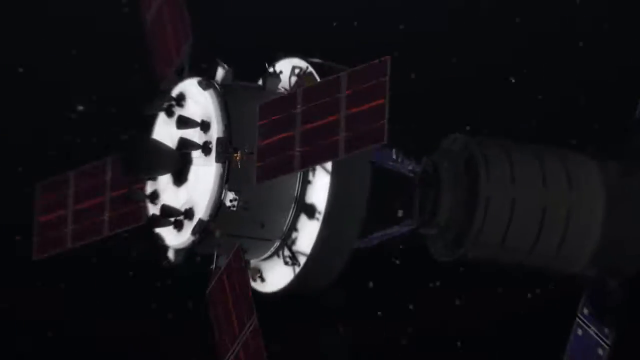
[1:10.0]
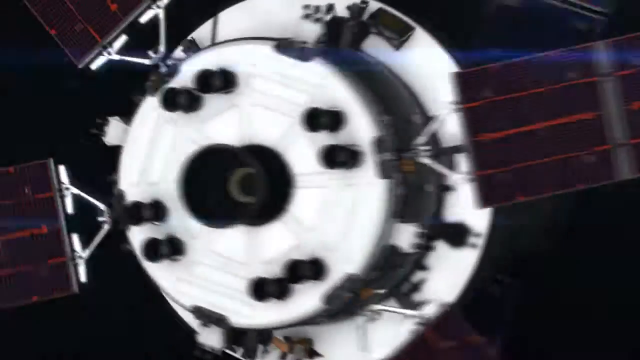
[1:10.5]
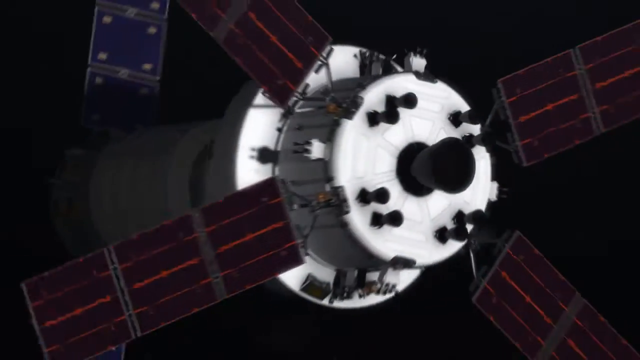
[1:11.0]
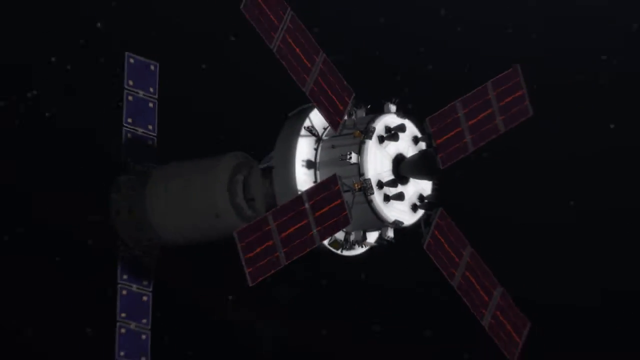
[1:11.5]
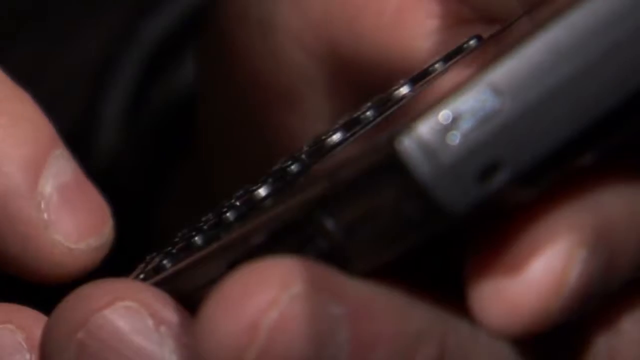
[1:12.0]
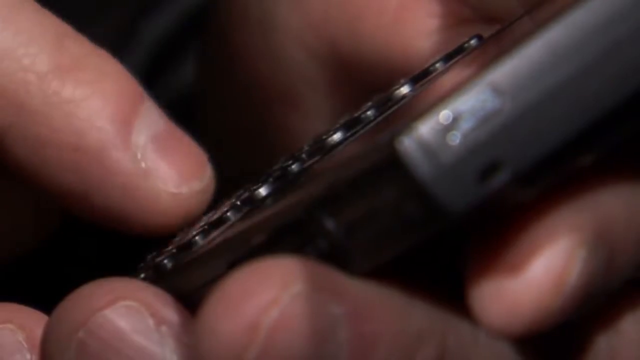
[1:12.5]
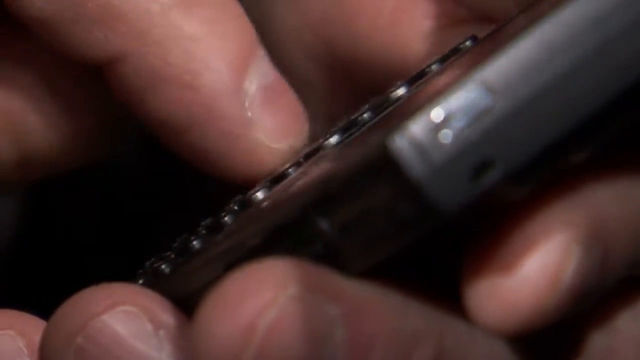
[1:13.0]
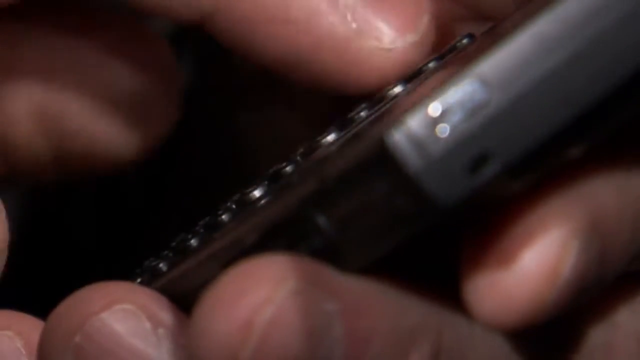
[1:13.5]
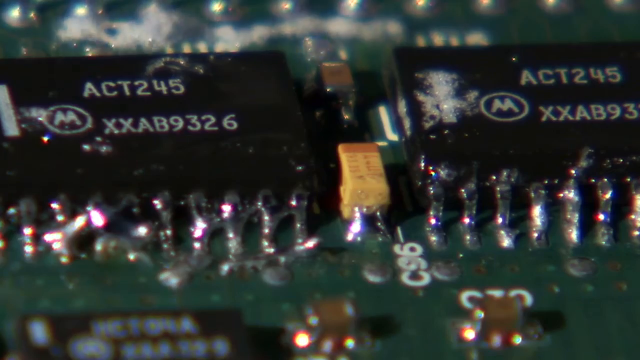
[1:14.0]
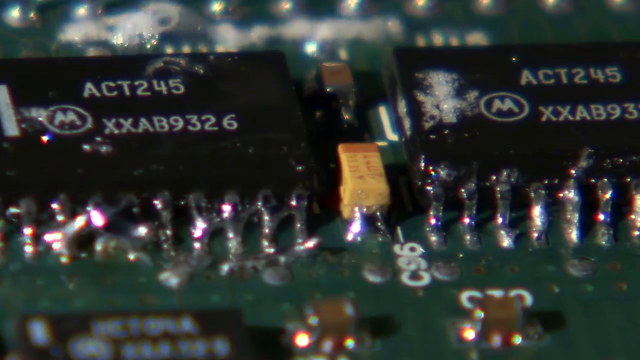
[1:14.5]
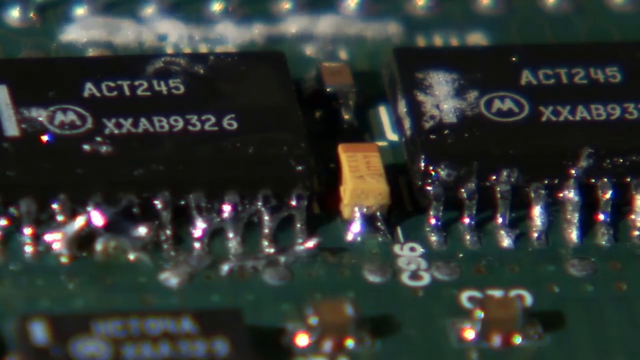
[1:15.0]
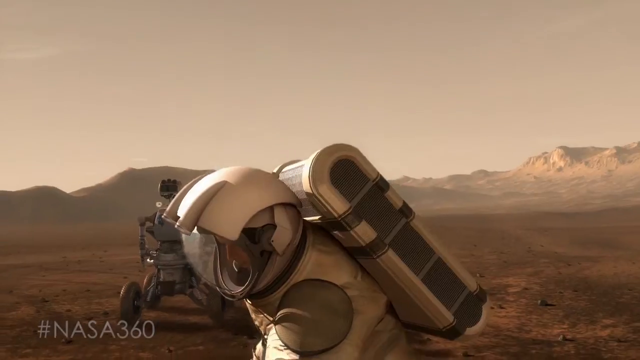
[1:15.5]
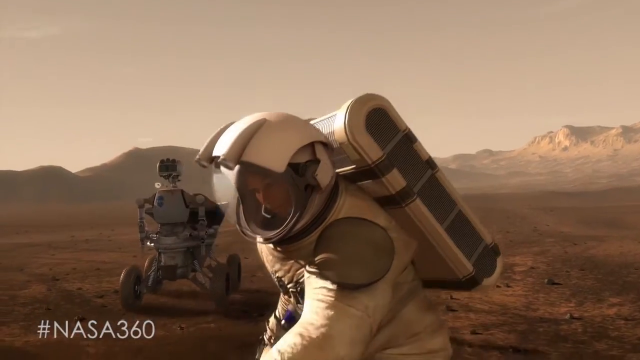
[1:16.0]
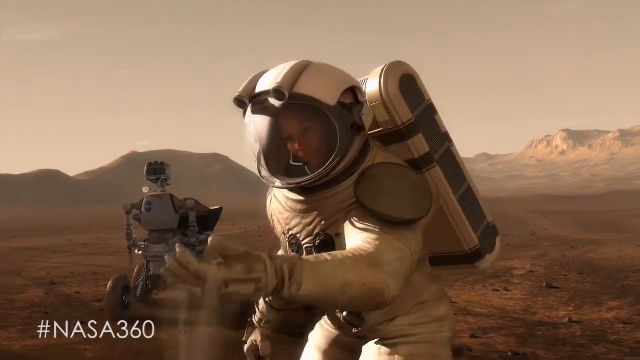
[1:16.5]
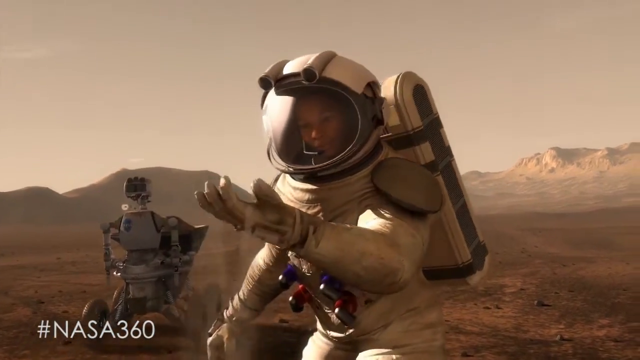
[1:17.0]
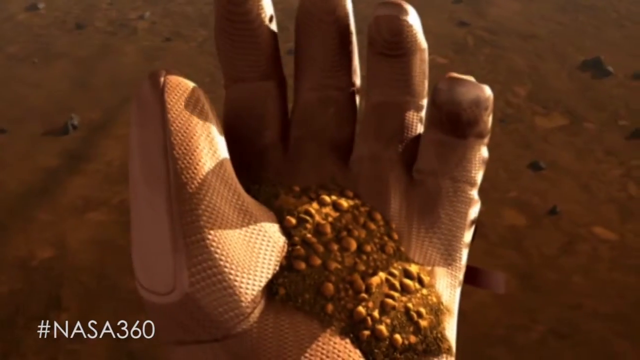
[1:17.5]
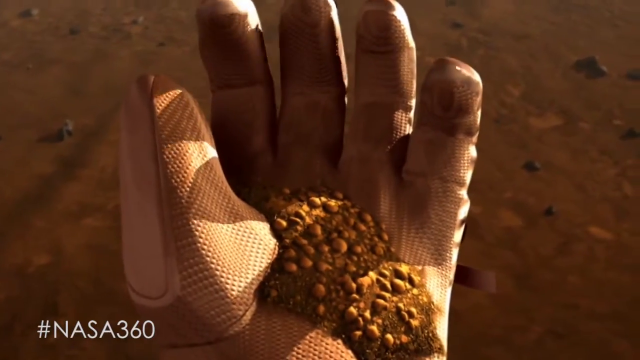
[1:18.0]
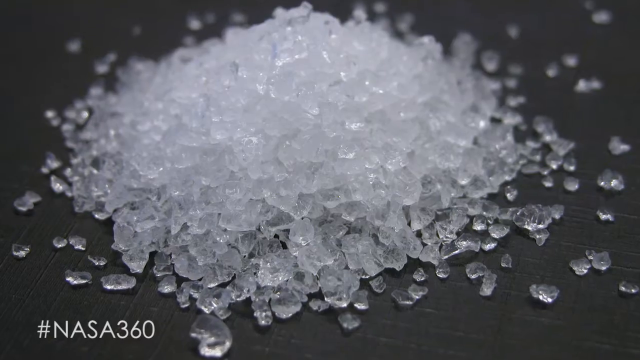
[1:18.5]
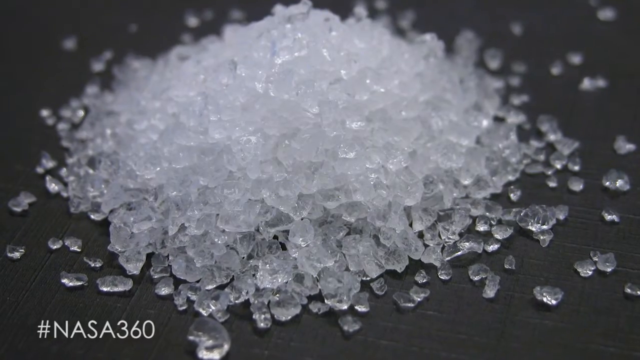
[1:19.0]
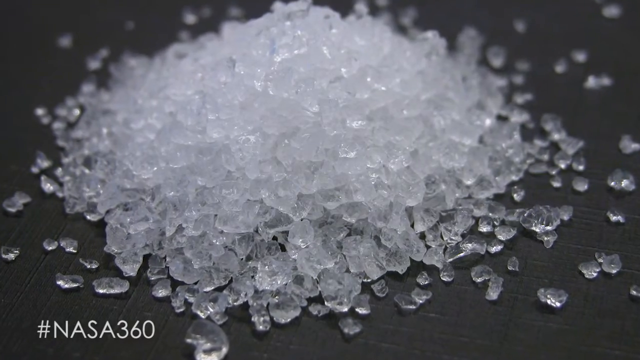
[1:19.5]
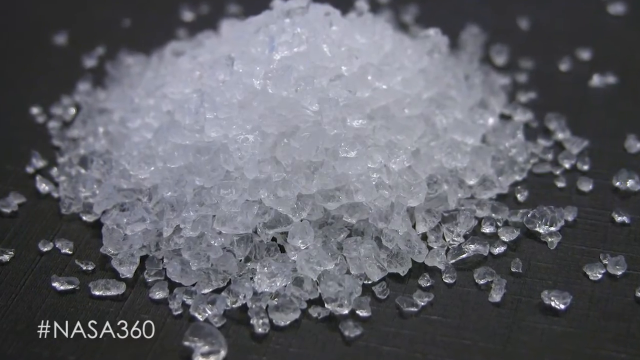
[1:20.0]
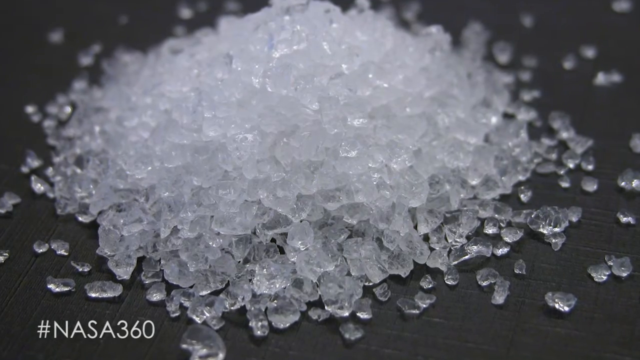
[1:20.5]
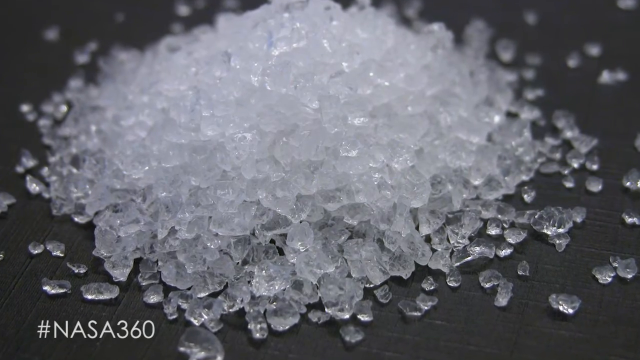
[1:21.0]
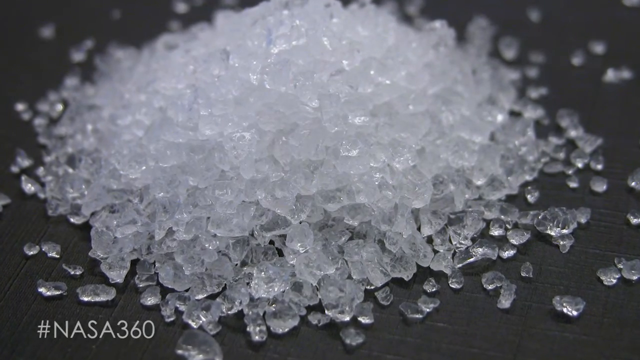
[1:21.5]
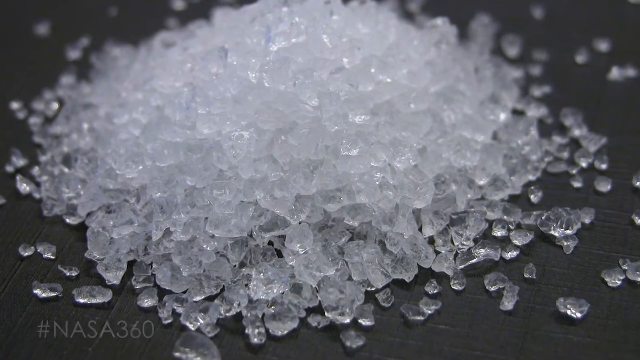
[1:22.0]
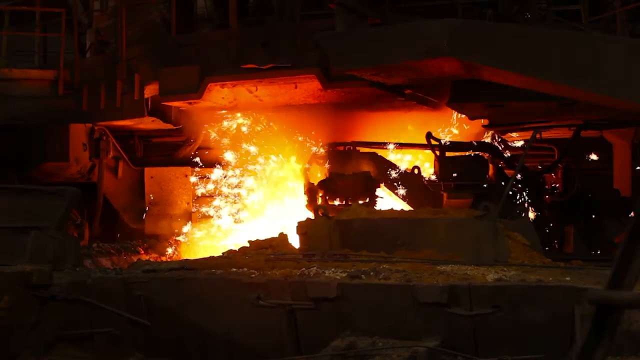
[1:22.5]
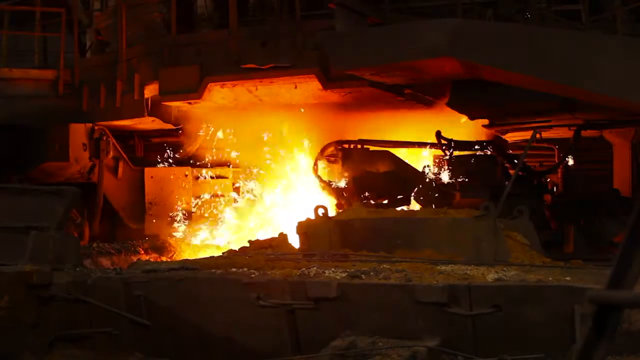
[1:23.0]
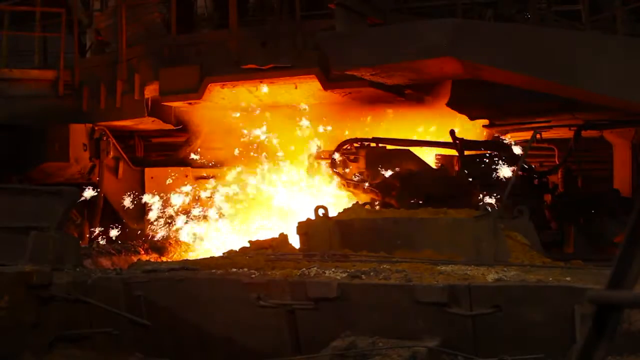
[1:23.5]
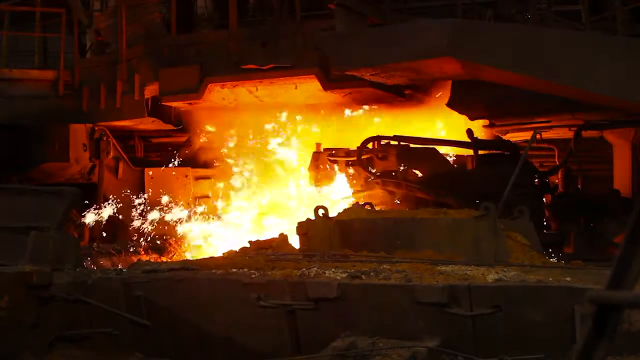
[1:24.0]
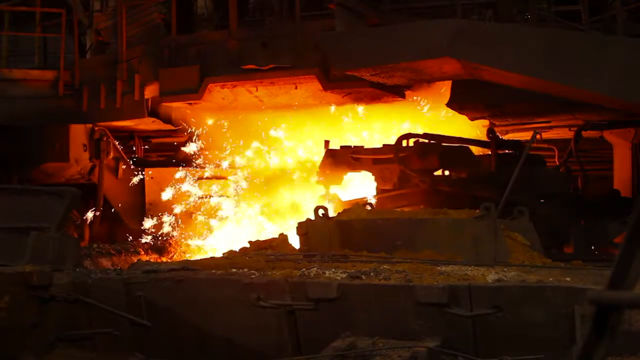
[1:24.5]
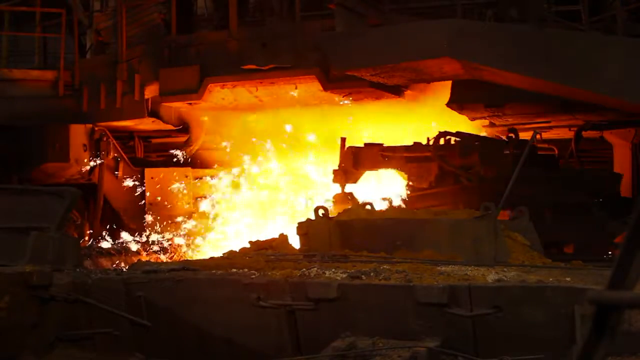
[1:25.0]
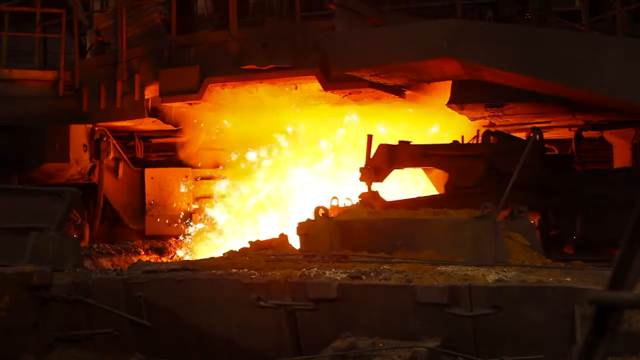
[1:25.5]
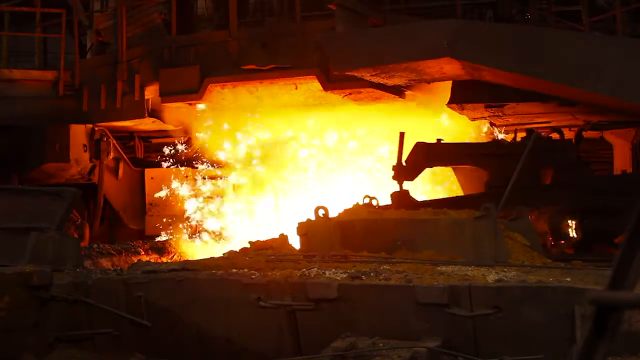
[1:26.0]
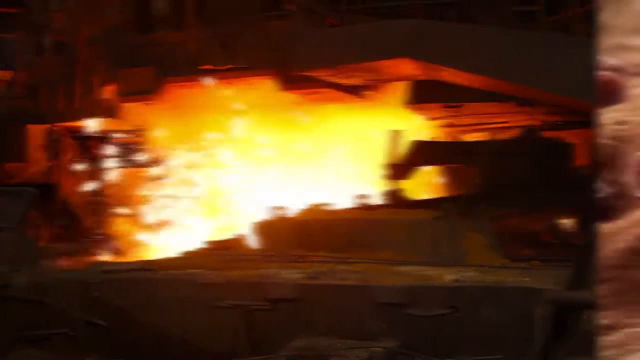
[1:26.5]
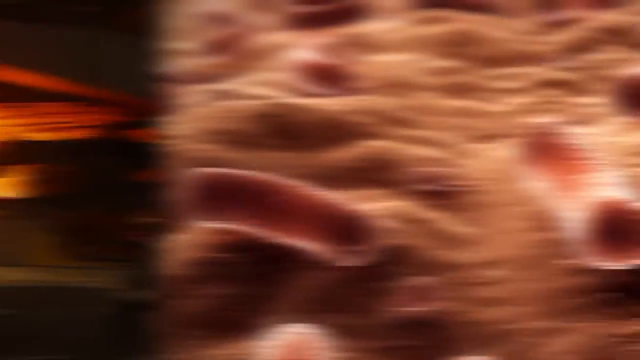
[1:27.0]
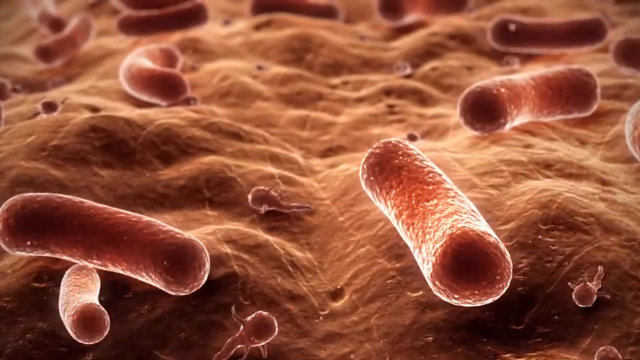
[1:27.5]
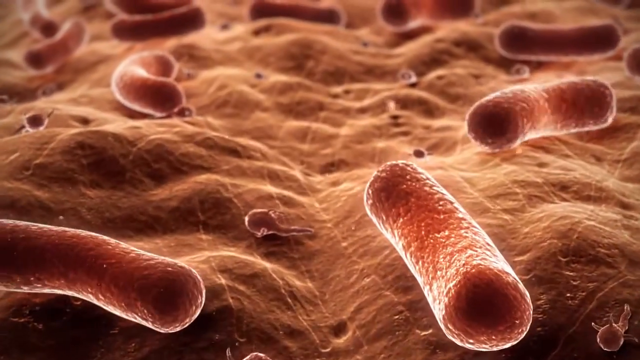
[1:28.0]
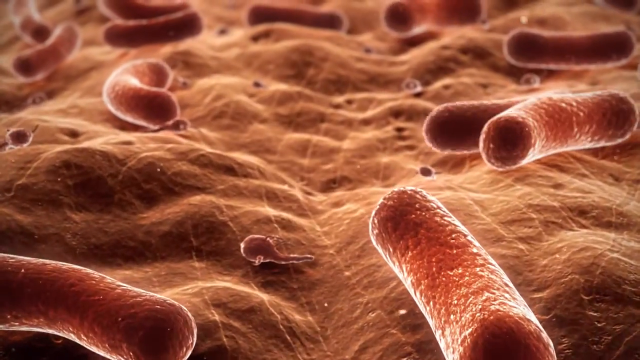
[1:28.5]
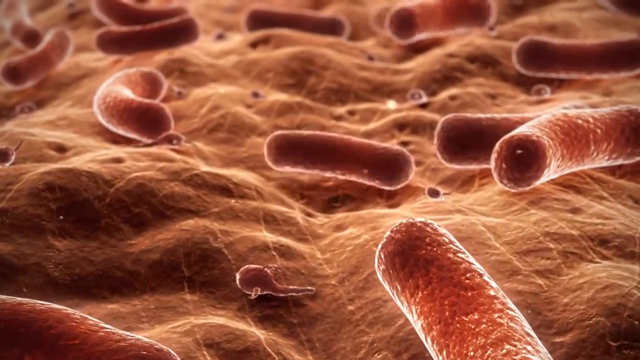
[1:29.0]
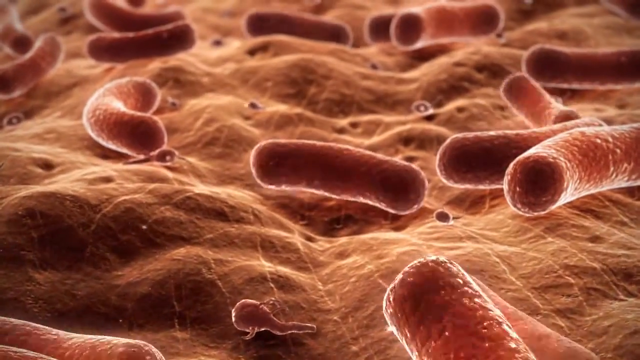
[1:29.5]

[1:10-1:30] A 3D render shows a large cylindrical satellite. The view starts on its side, rapidly pans toward its front, showing various solar panels pointing forward, and then moves to its other side as it floats through space. The video cuts to stock footage of someone entering various numbers on a cell phone, then to footage of a microchip covered with small microprocessors, with what seems to be a white bubbling liquid on it. Next, a 3D render shows an astronaut on a red rocky planet bending over to pick up a large pile of rocks and dirt with their left hand. The camera cuts to the astronaut's hand filled with the dirt as it slowly shifts through their hand. Stock footage then shows a pile of white semi-transparent rocks on a black surface as the camera slowly zooms in toward them. Finally, the footage shows a large, spitting piece of machinery at some kind of metal forge.